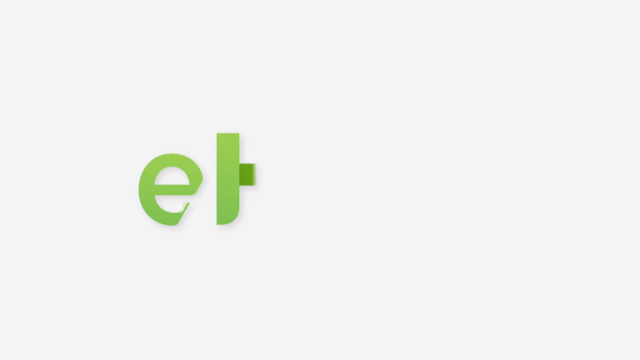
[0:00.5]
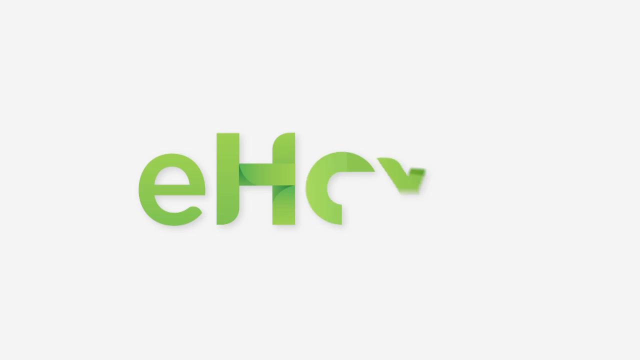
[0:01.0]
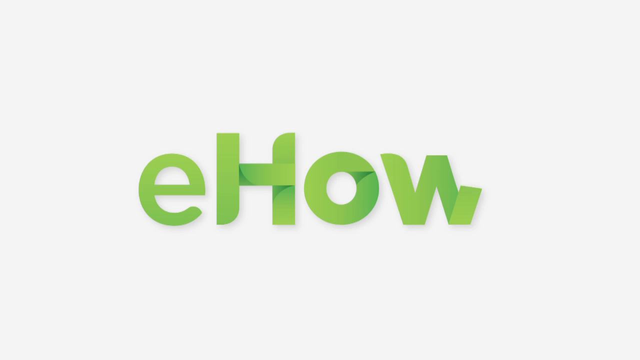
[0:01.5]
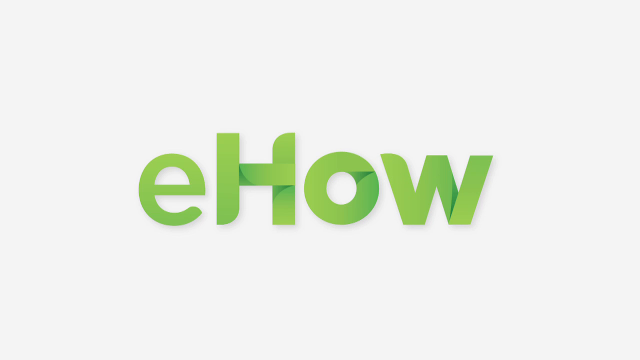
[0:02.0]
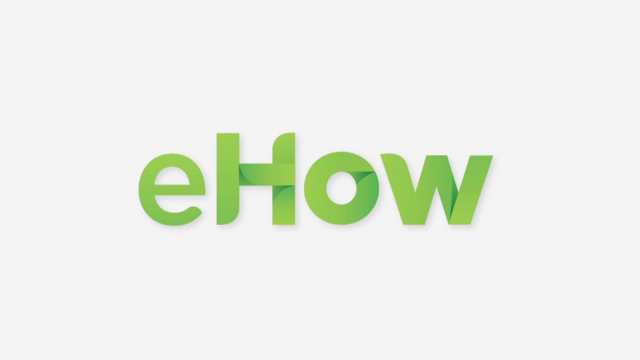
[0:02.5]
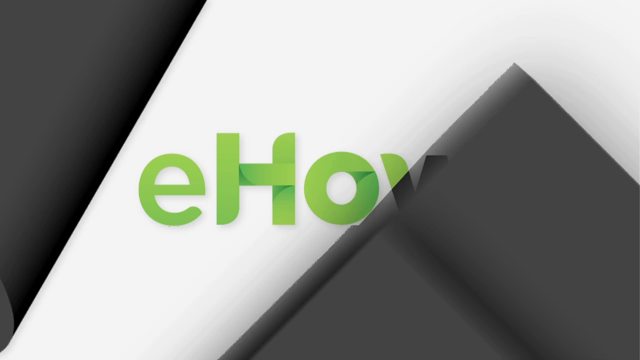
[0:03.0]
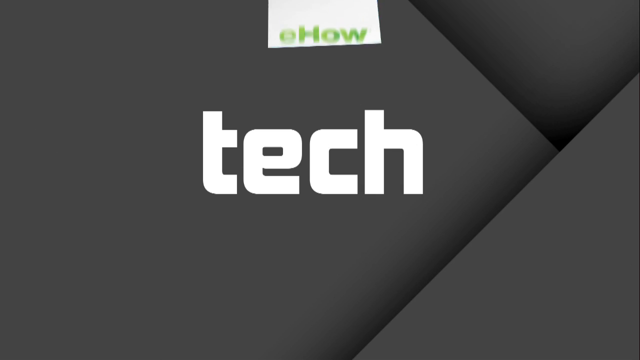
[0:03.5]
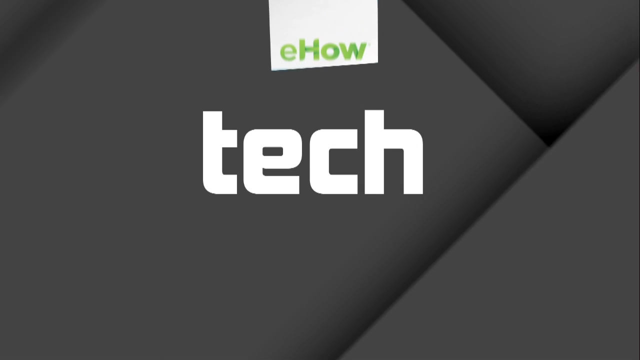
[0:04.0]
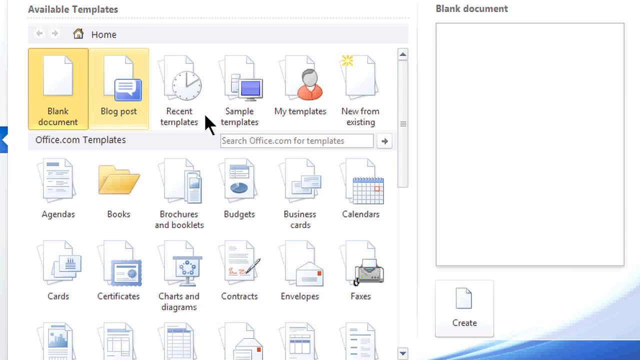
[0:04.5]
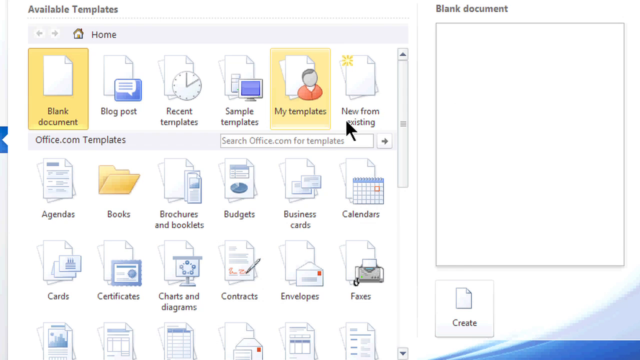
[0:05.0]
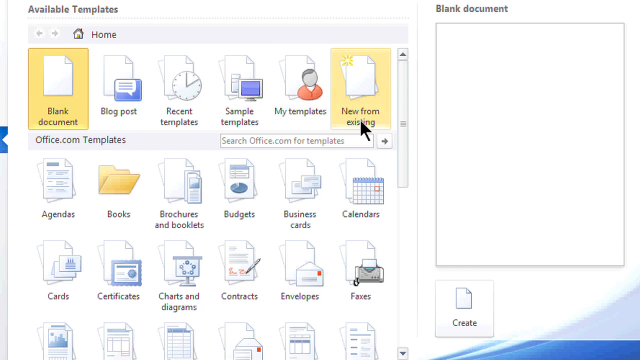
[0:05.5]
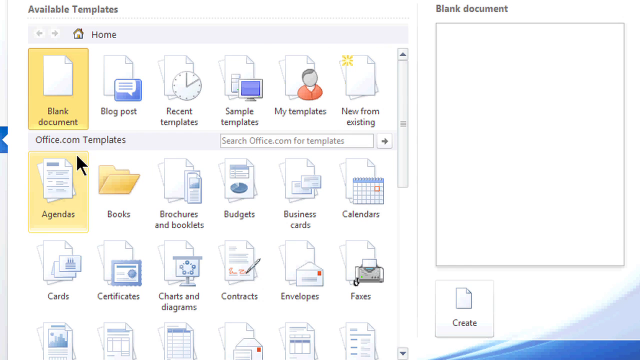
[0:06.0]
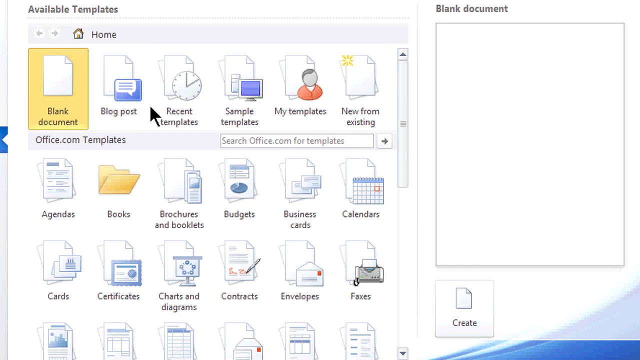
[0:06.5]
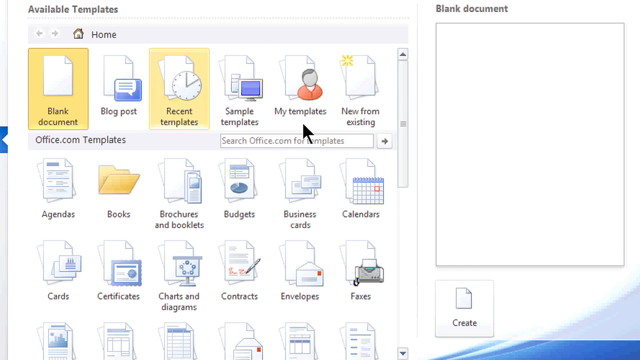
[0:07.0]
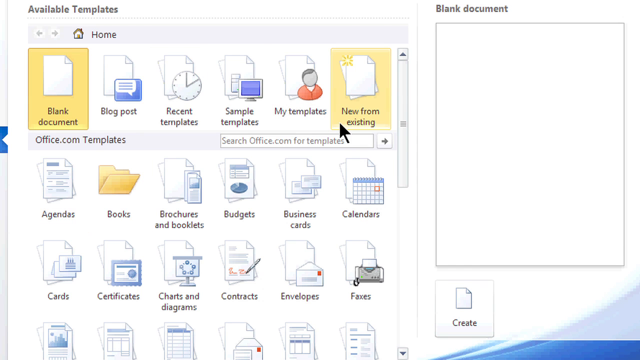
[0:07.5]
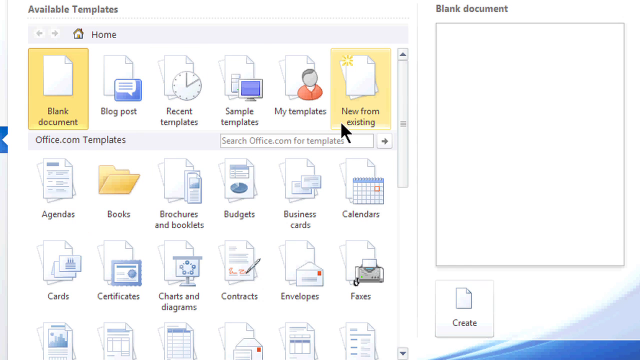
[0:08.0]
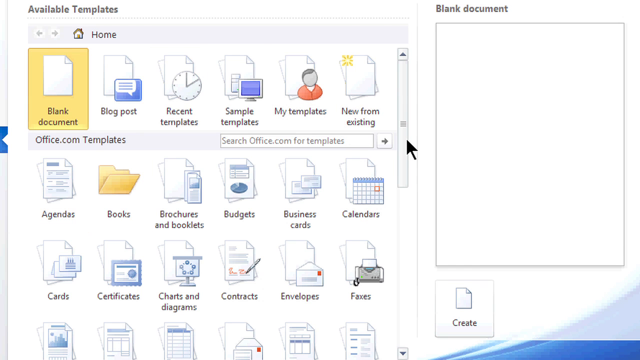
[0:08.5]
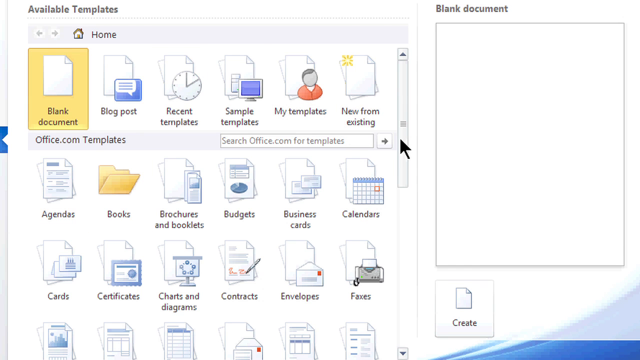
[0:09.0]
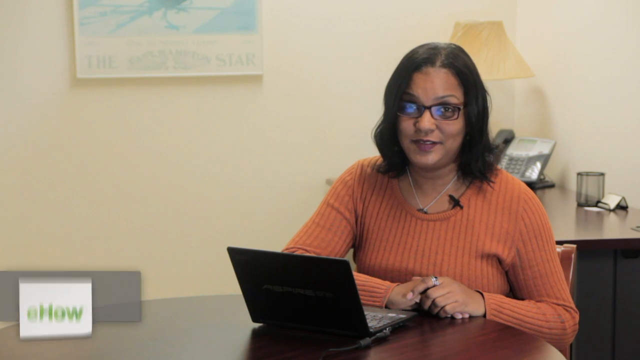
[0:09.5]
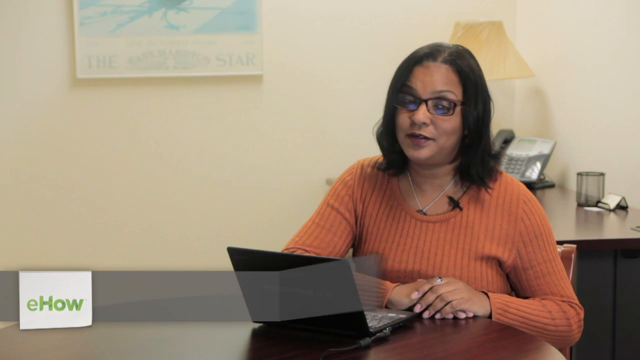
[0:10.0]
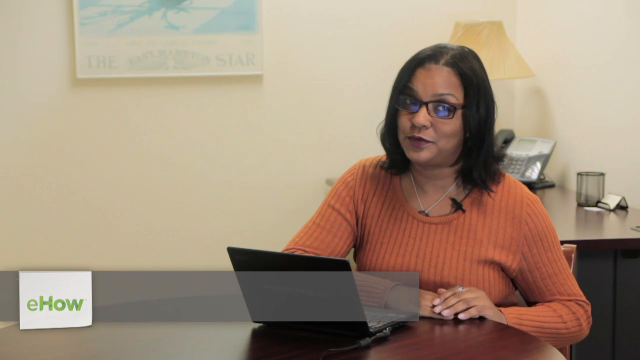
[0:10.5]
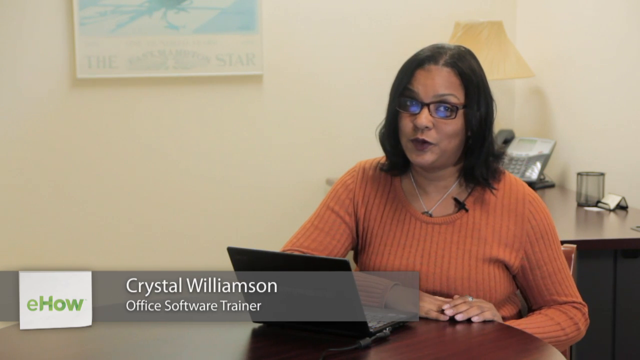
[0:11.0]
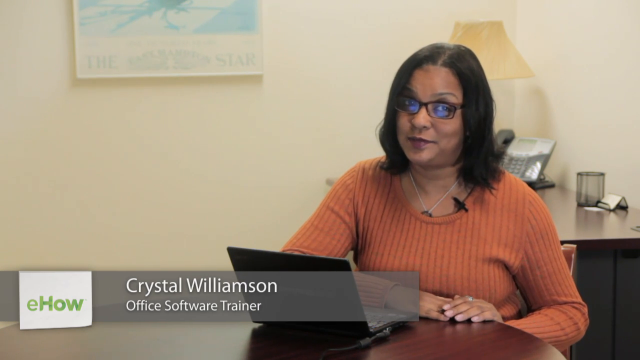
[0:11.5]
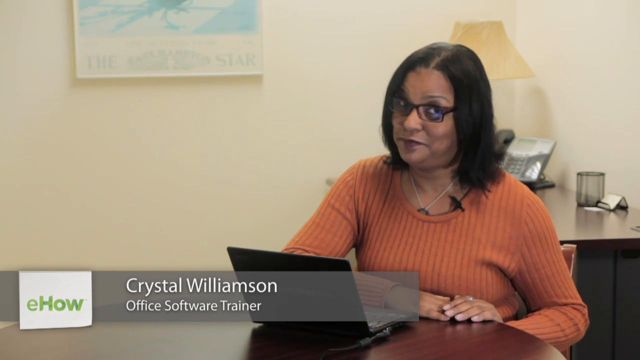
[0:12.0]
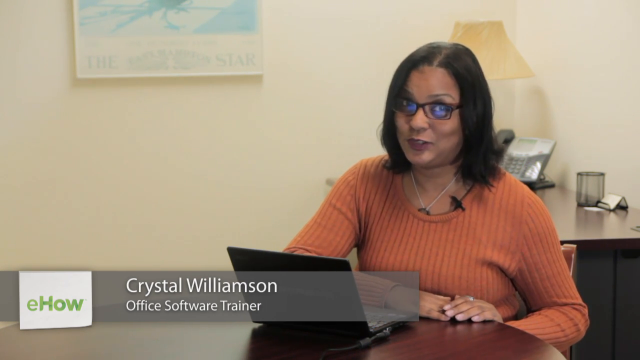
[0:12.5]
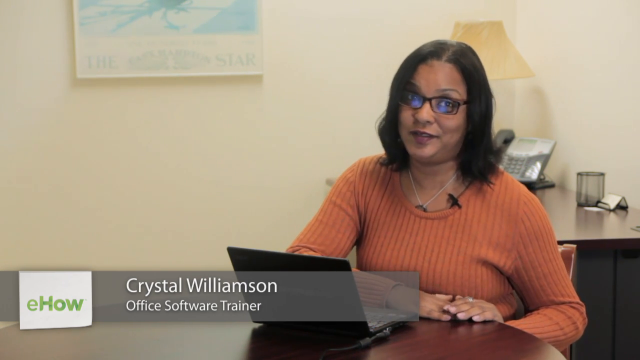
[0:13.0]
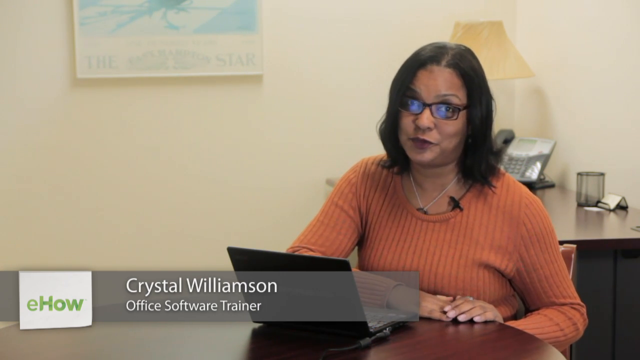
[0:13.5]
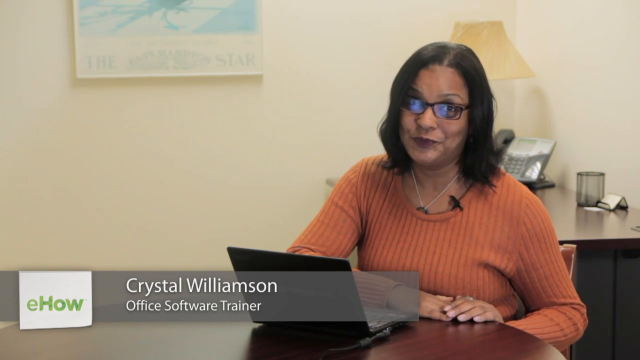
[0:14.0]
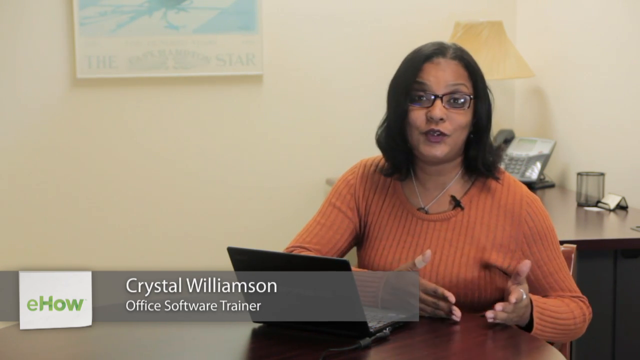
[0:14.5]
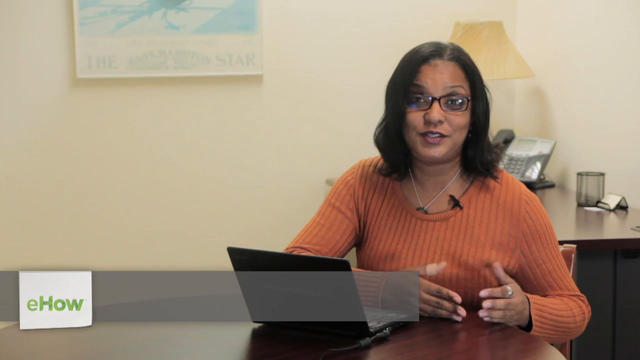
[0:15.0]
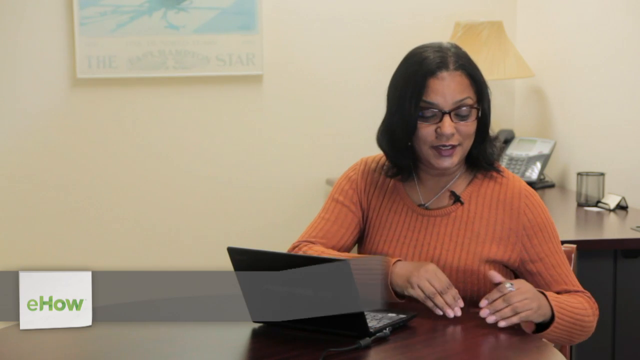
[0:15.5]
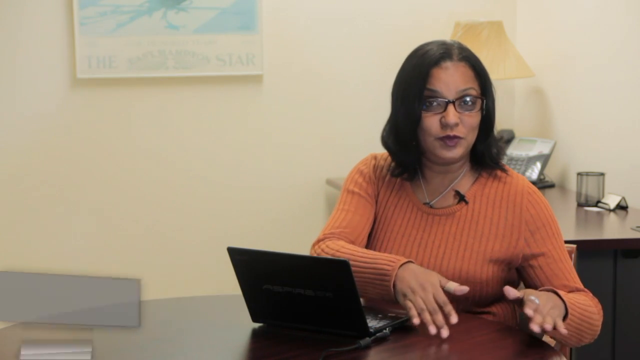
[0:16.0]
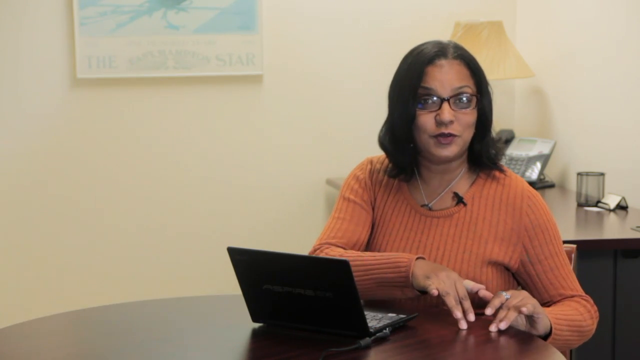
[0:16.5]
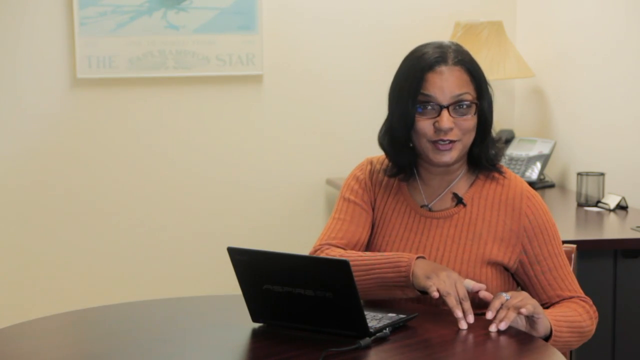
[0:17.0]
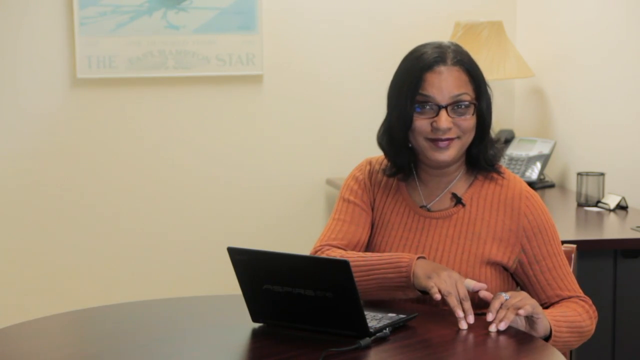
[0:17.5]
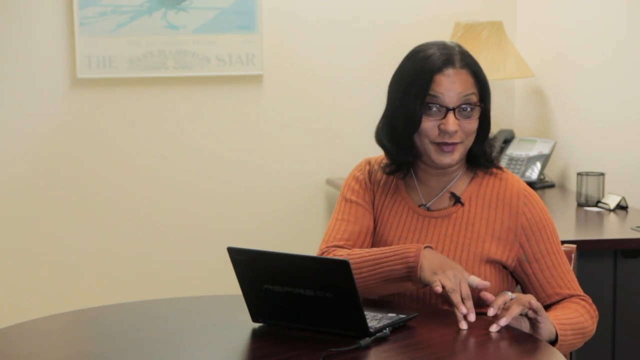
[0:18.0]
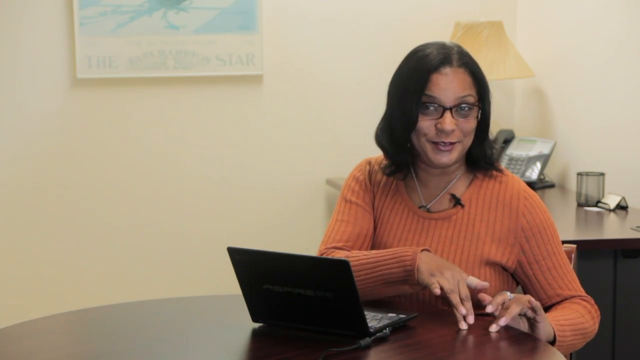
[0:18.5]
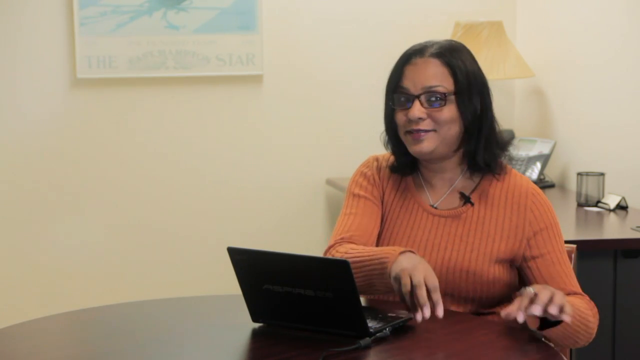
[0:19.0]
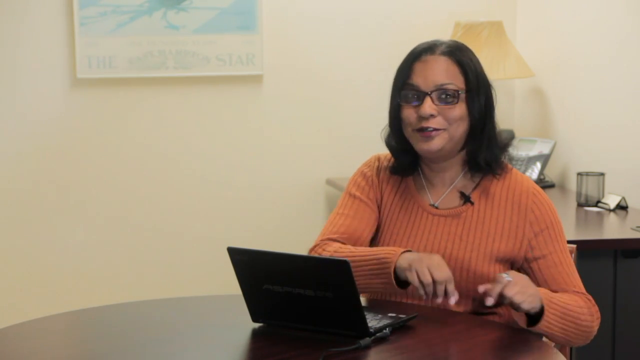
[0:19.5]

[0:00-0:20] Christa Williams, now a trainer, is sitting in her office; she is an office software trainer. No one is behind her, and the wall of the room is white. She is a woman who appears to be 40 to 50 years old, with long hair, and she wears glasses and a neck chain. She is sitting, not standing, and talking, apparently on a video call with someone. A black laptop is on the desk in front of her, there is something like a mug behind her, and something is framed on the walls. She has a ring, and she touches the desk while talking. There are no animals, kids or other people around her.